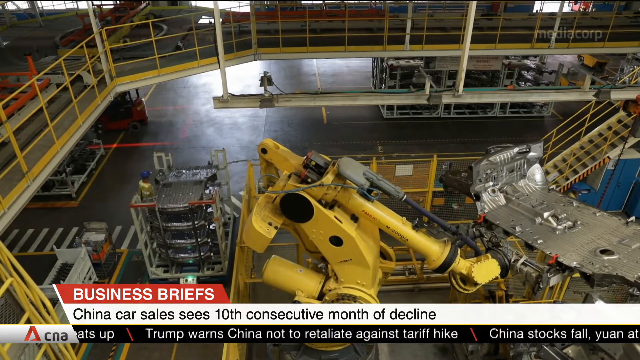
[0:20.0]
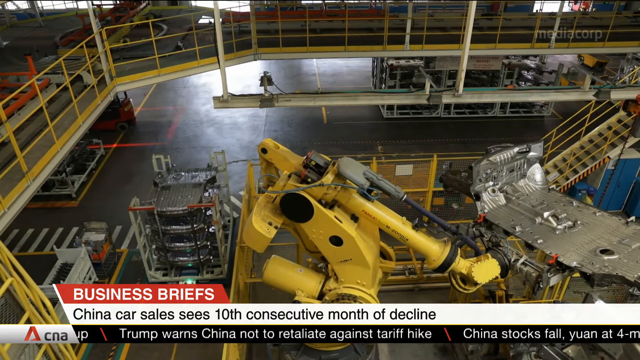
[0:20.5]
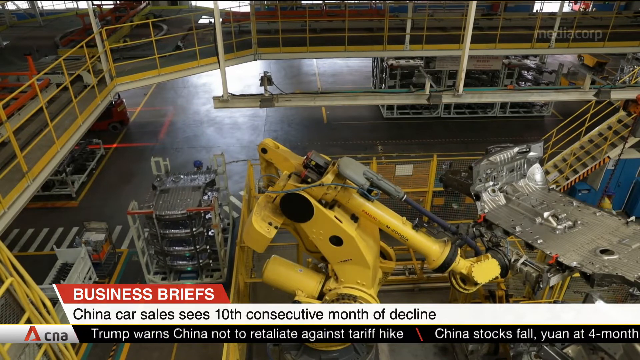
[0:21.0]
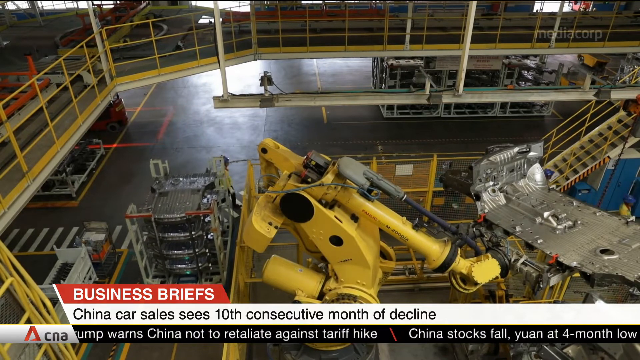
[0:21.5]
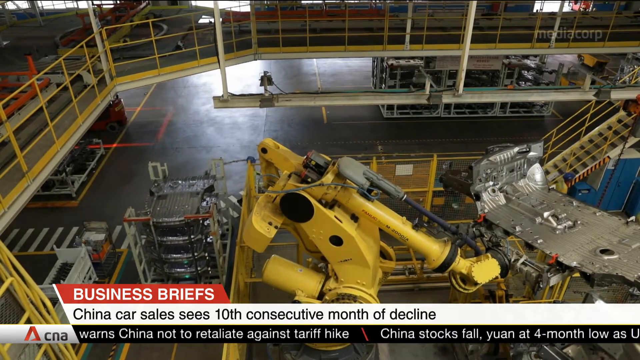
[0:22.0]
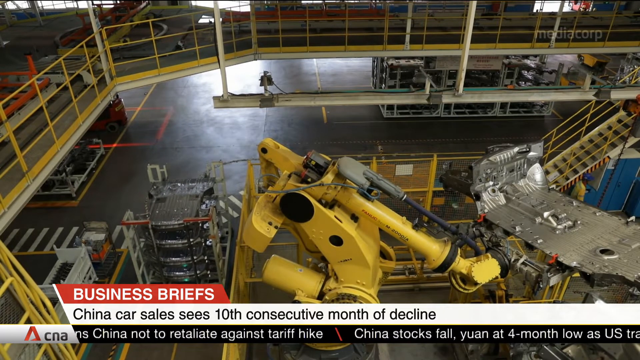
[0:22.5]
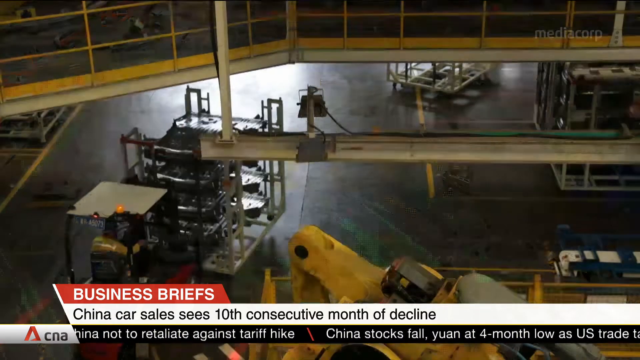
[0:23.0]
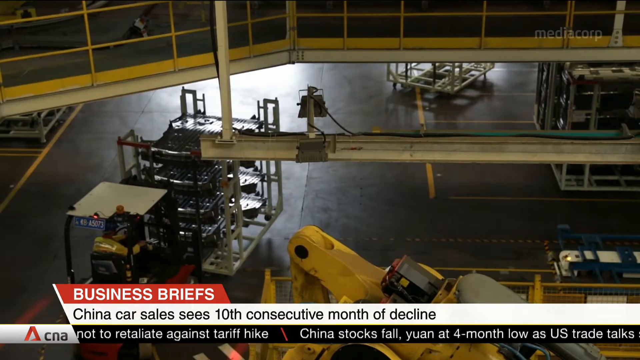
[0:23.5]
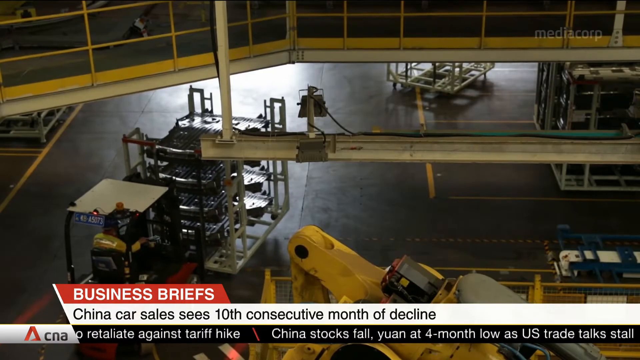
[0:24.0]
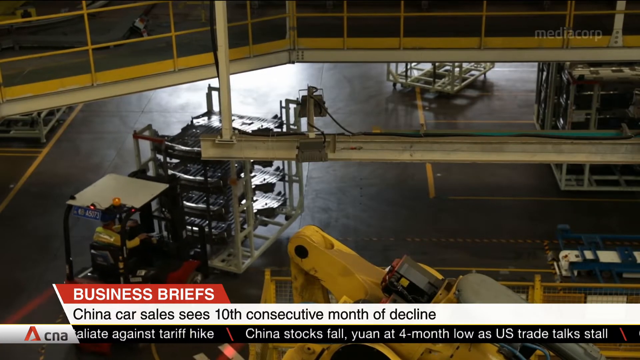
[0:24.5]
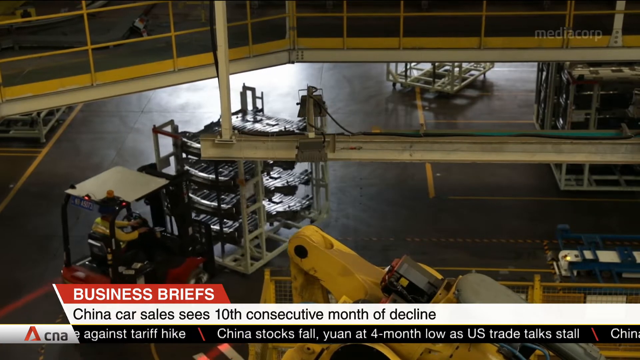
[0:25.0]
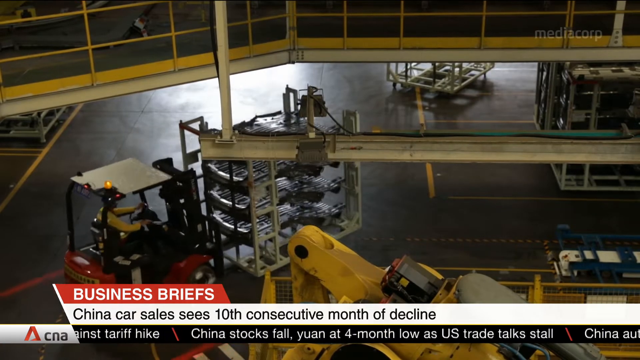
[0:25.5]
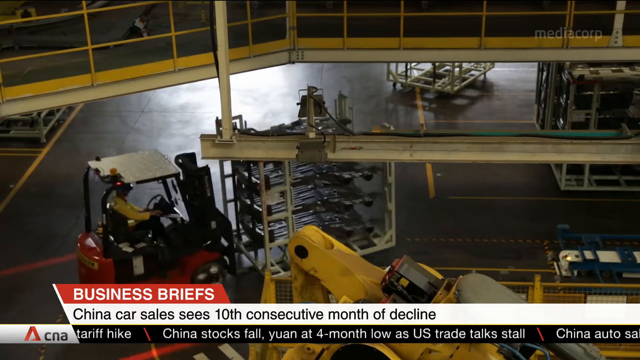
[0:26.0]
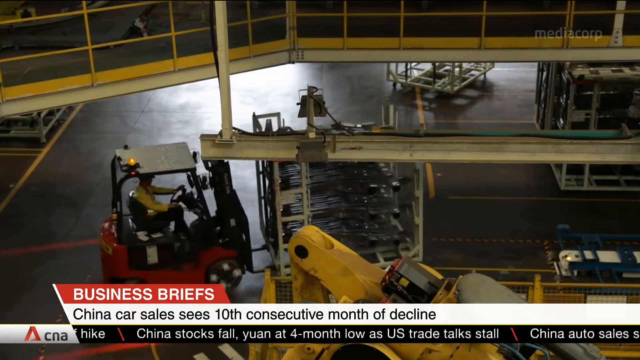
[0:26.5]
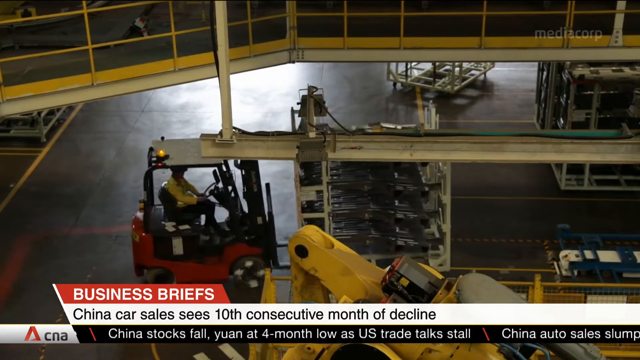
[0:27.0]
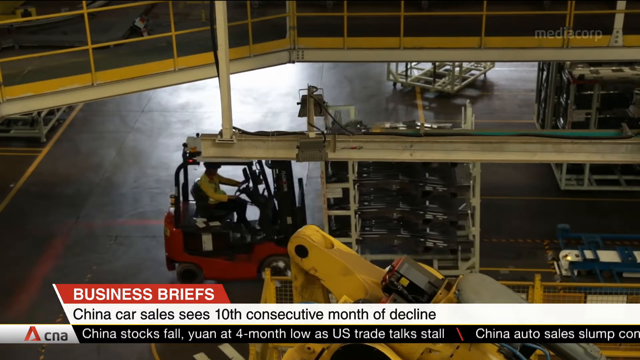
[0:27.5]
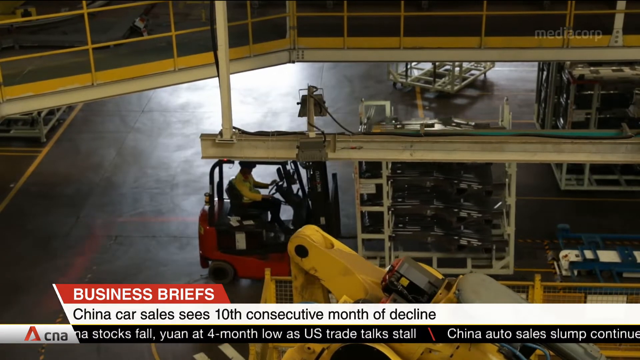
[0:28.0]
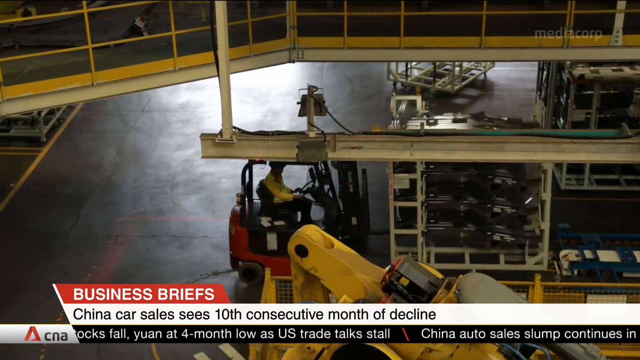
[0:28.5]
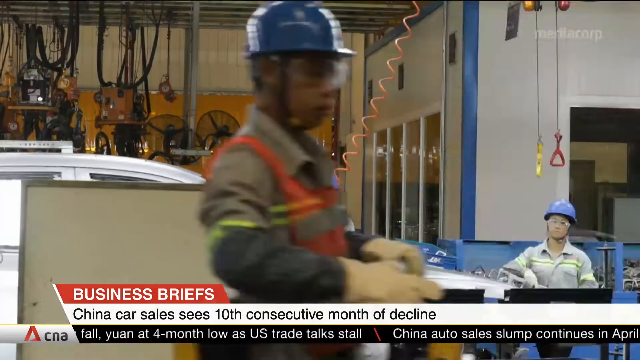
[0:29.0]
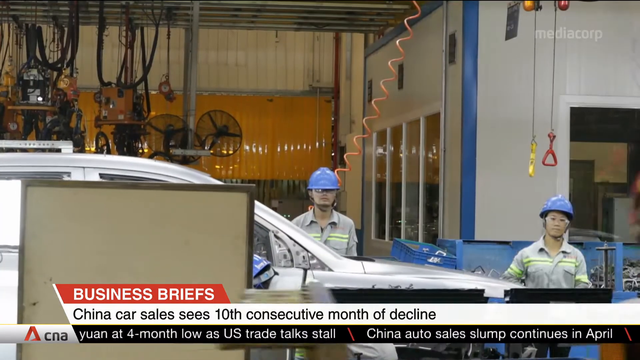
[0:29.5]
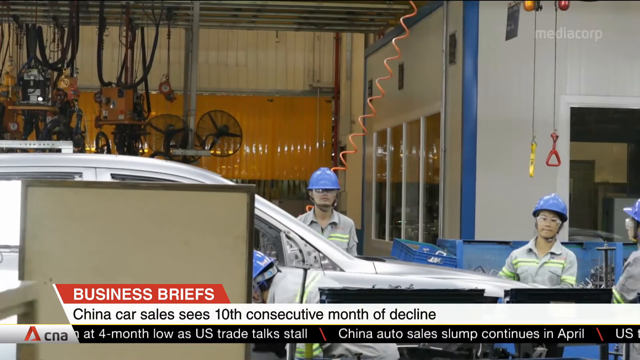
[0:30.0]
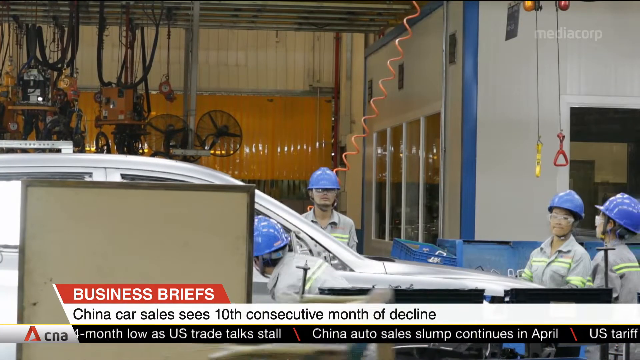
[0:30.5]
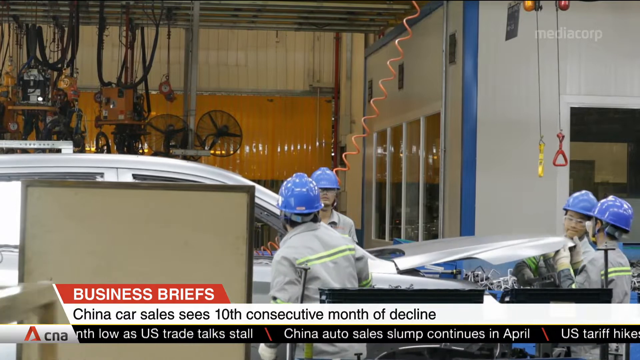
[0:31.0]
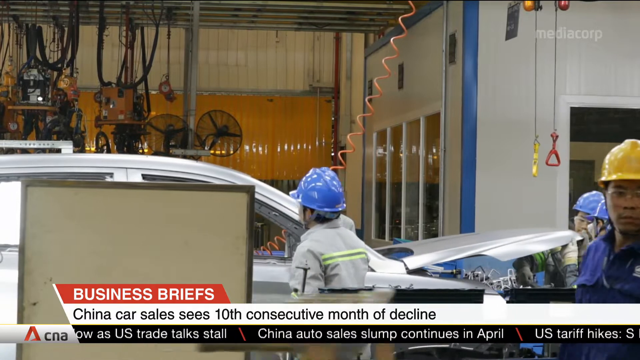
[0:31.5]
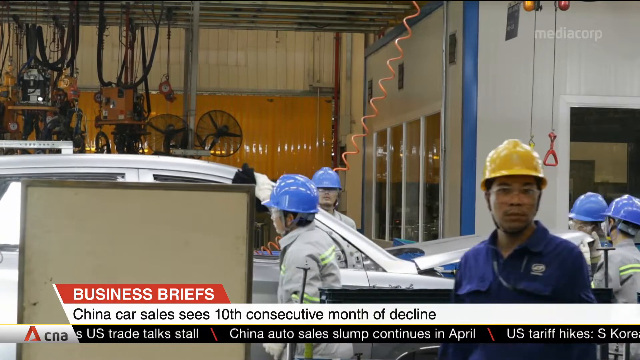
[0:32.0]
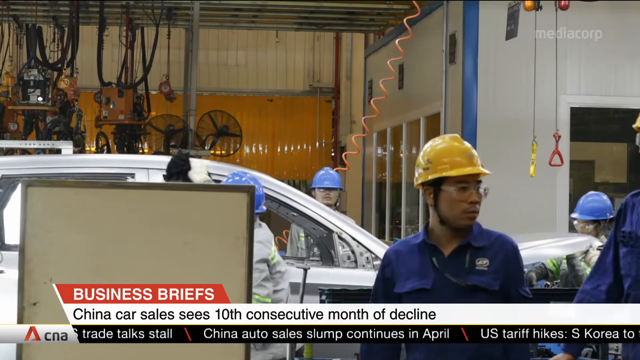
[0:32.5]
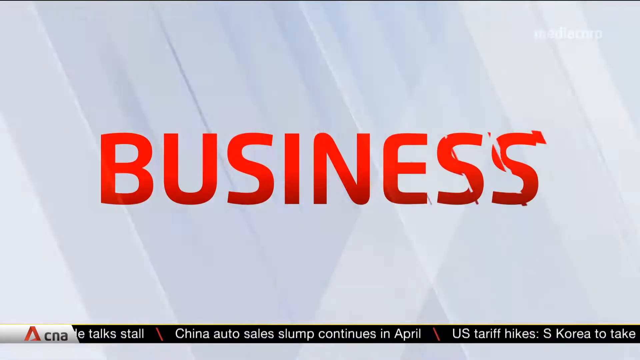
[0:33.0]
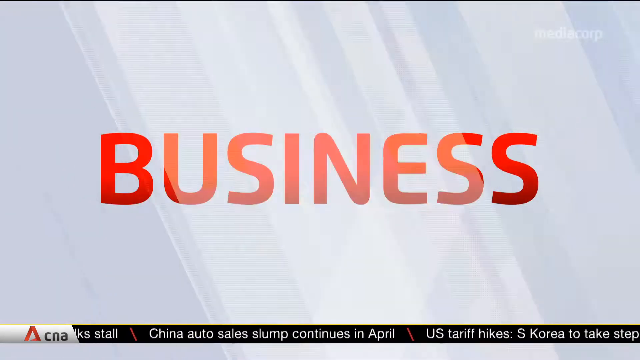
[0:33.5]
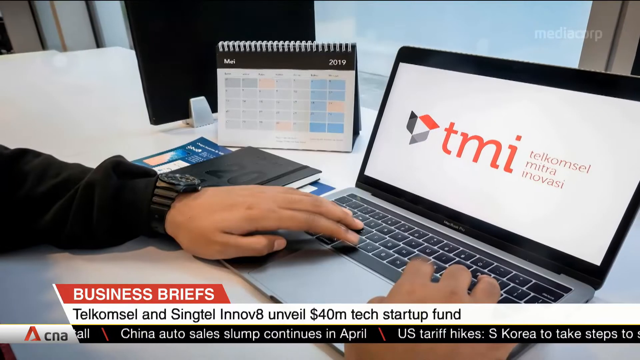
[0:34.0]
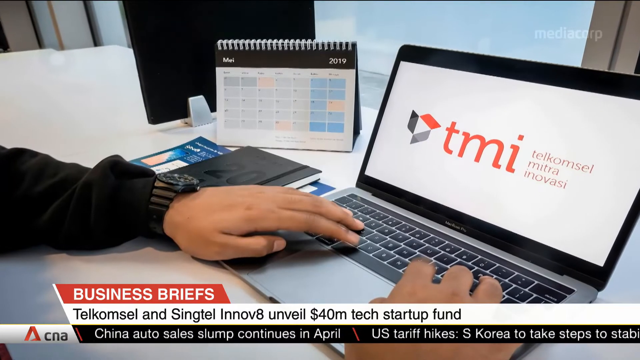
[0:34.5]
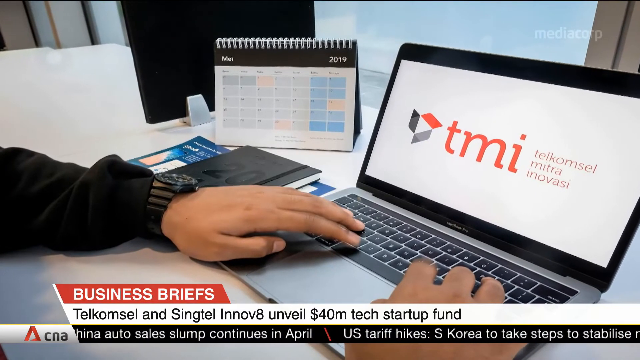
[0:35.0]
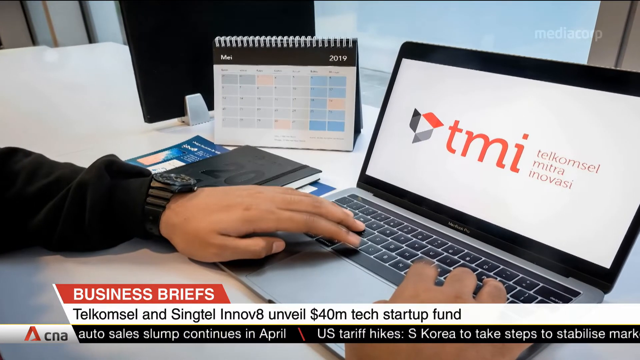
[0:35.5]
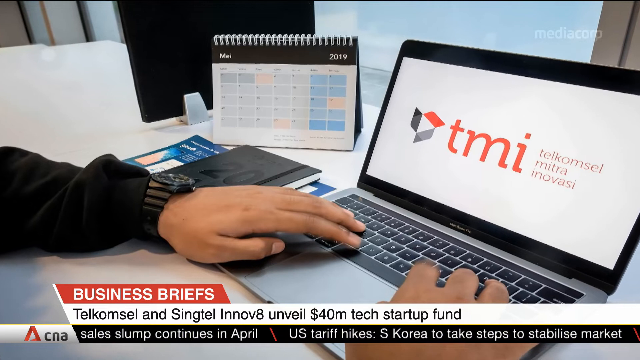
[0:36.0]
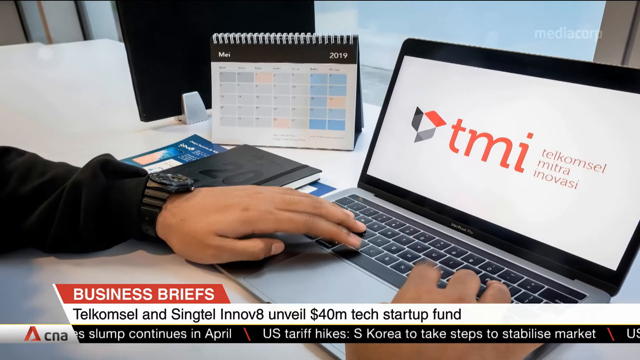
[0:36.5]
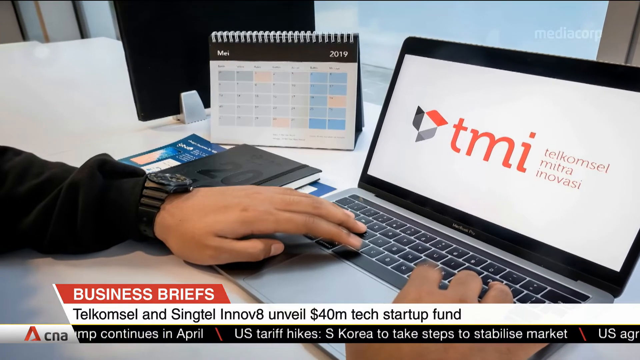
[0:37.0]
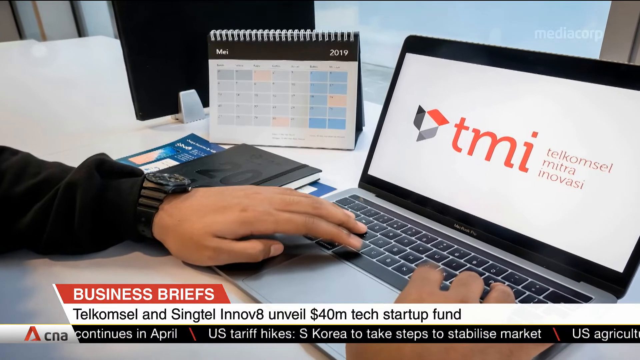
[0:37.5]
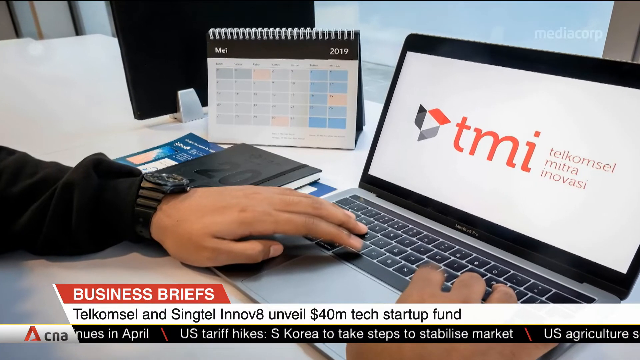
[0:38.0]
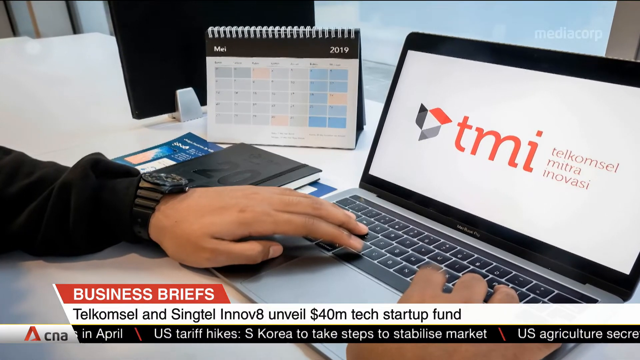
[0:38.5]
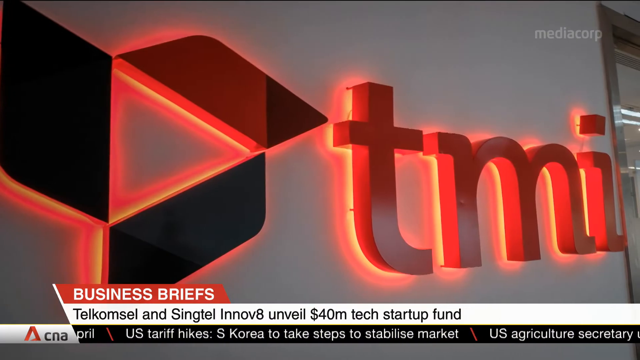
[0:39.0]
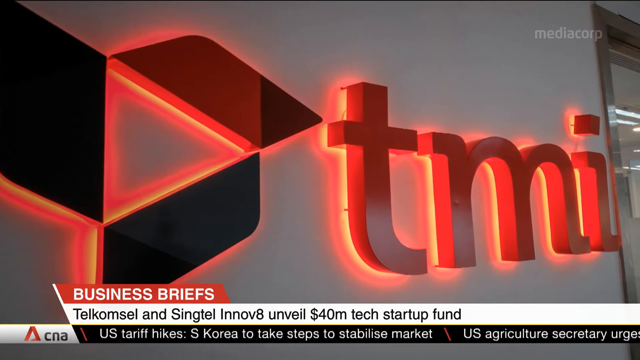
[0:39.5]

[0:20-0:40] The shot of the factory from the mezzanine holds, then cuts to a zoomed-in shot of a red forklift with a white roof moving something. Another shot shows a vehicle being made, checked and moving along the assembly line. People wear gray coveralls with bright white stripes along the back and blue hard hats; another man wears blue coveralls, a bright yellow hard hat and goggles, and all of them have goggles on. The video cuts to a person's hands typing on a laptop that shows "TMI" and "Telkomsel Mitra Innovest." A calendar is propped up in the corner of the desk the laptop is on, along with some documents. The person wears a black watch on the left hand and a black long sleeve. Text at the bottom reads "Telkomsel and Singtel Innovate Unveil $40 million tech startup fund." The video then cuts to what appears to be a business with "TMI" on the outside.